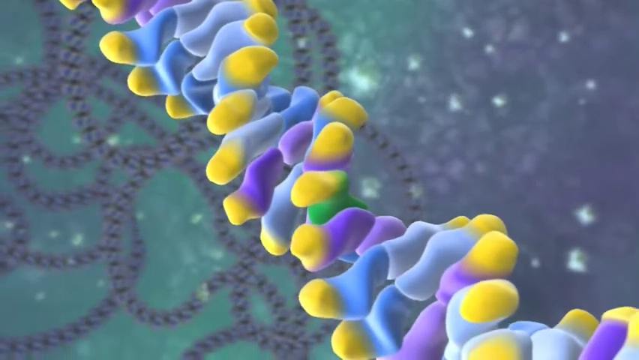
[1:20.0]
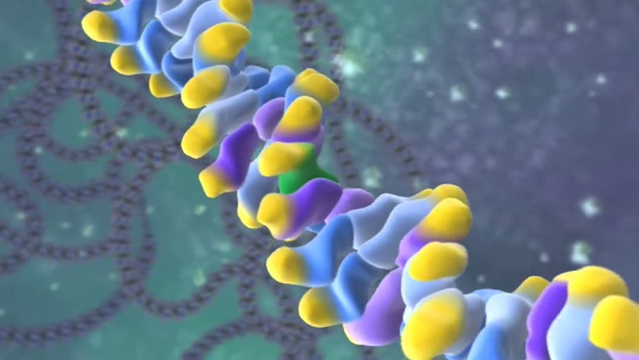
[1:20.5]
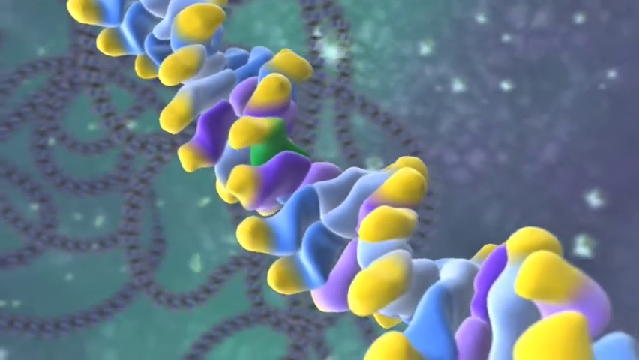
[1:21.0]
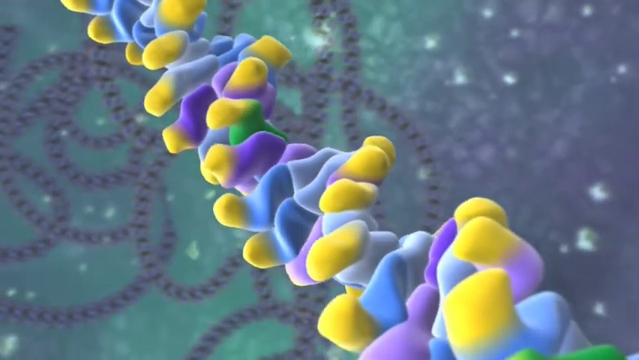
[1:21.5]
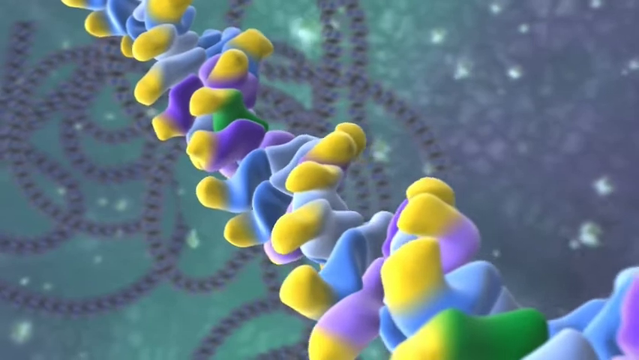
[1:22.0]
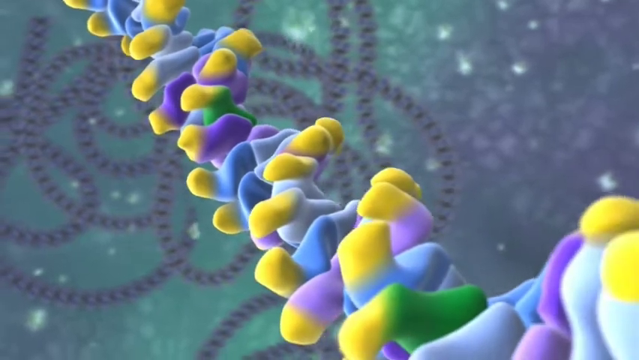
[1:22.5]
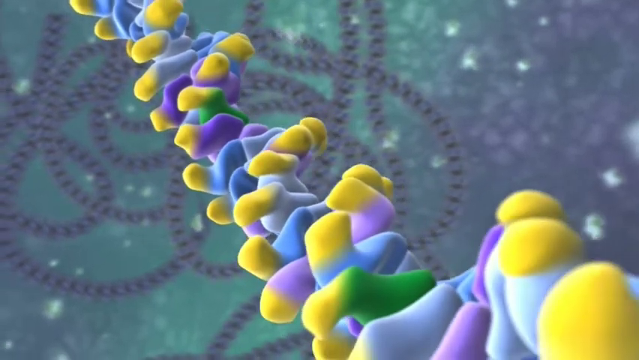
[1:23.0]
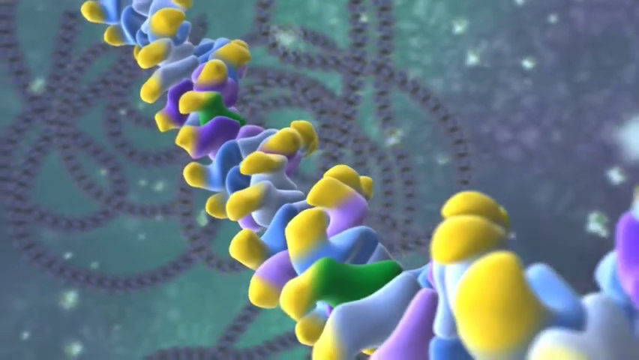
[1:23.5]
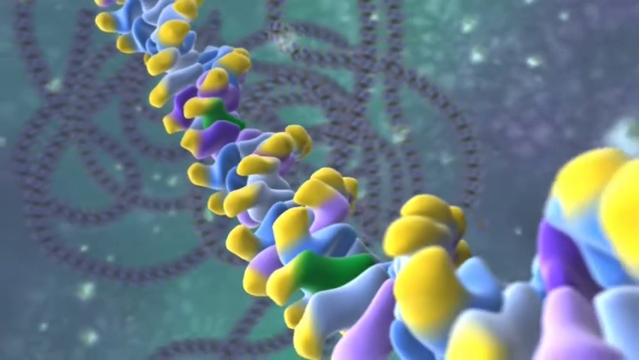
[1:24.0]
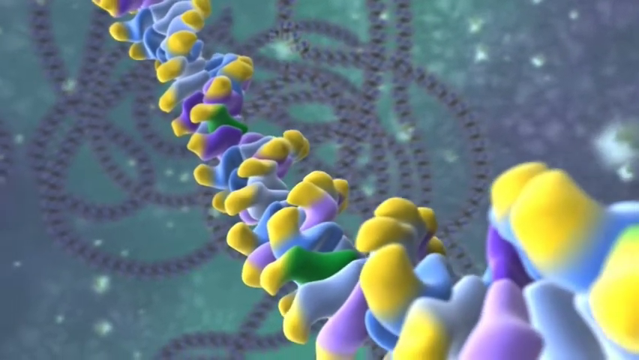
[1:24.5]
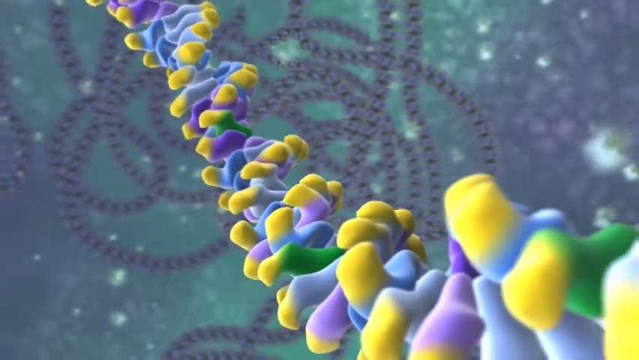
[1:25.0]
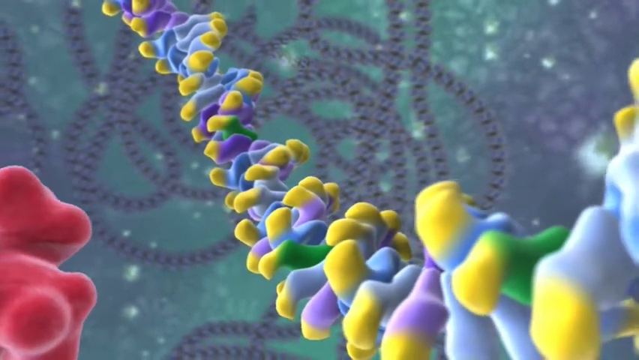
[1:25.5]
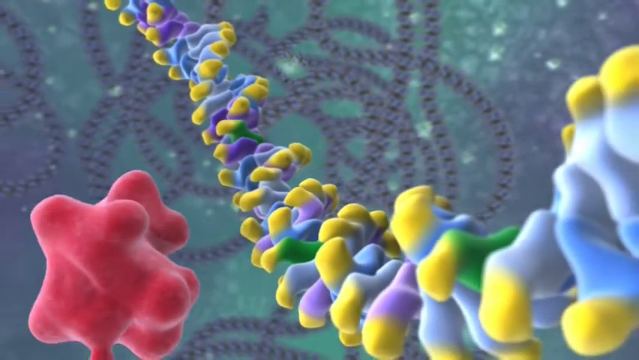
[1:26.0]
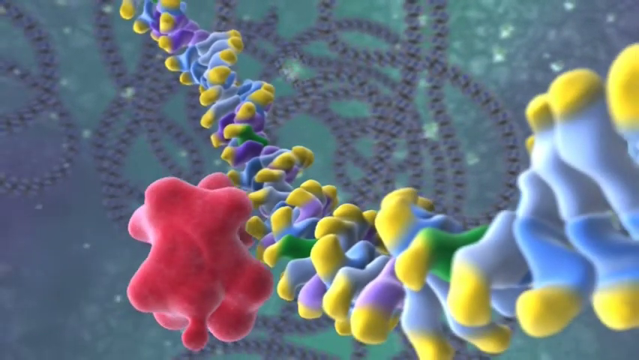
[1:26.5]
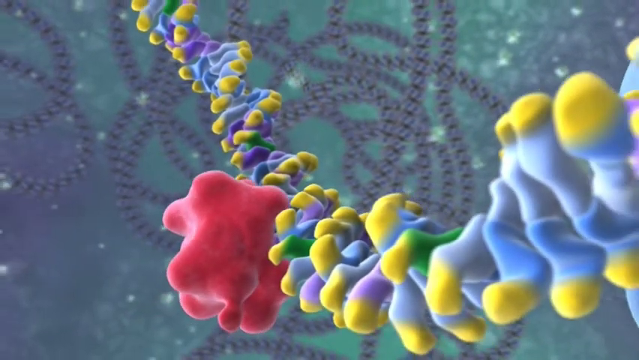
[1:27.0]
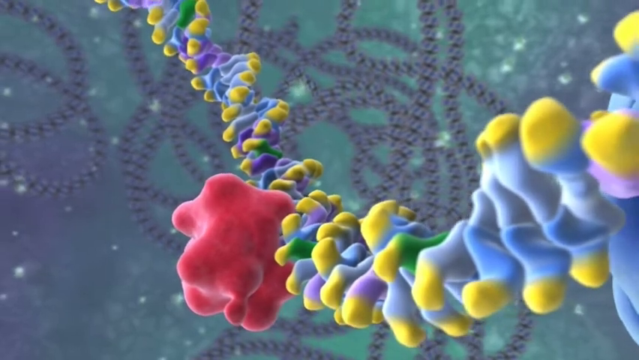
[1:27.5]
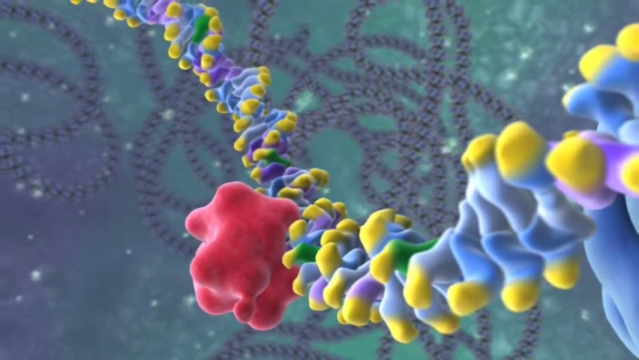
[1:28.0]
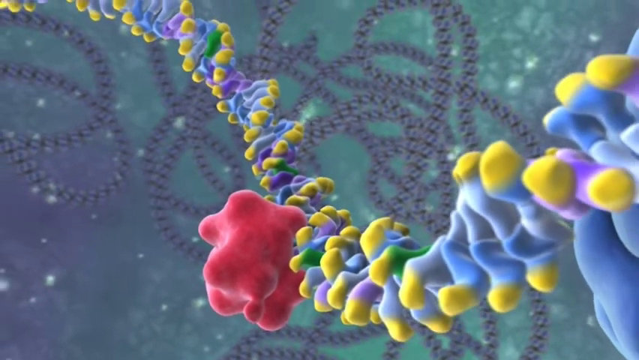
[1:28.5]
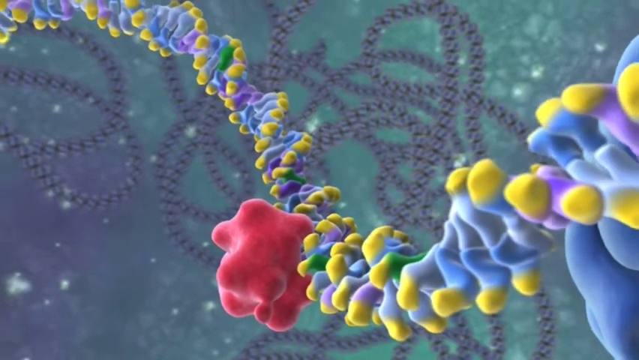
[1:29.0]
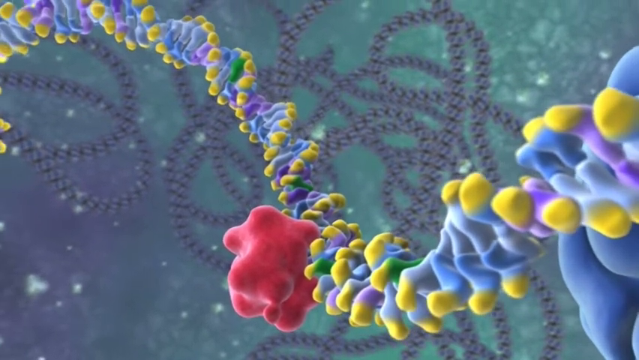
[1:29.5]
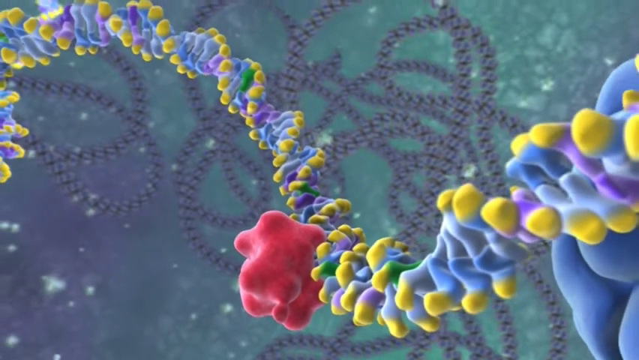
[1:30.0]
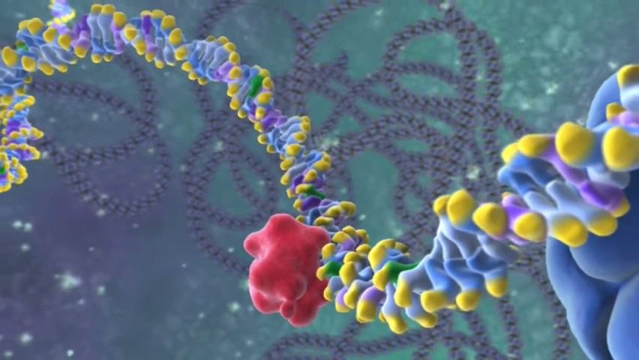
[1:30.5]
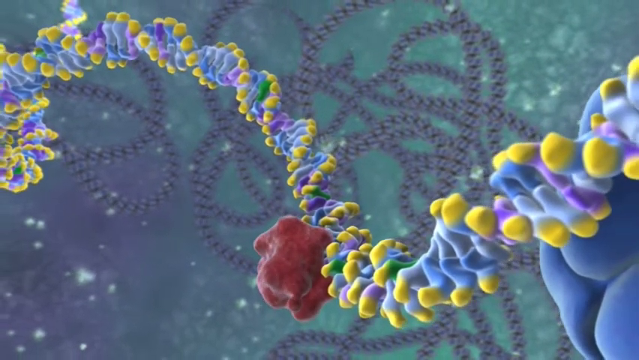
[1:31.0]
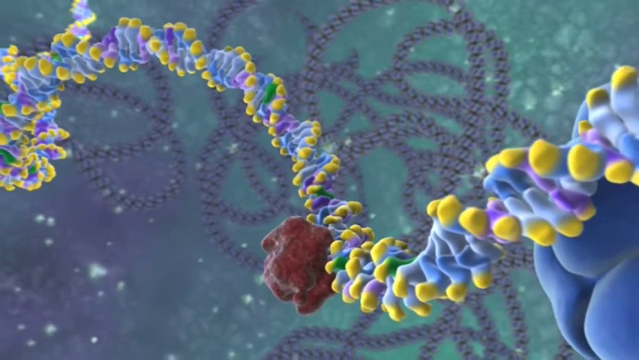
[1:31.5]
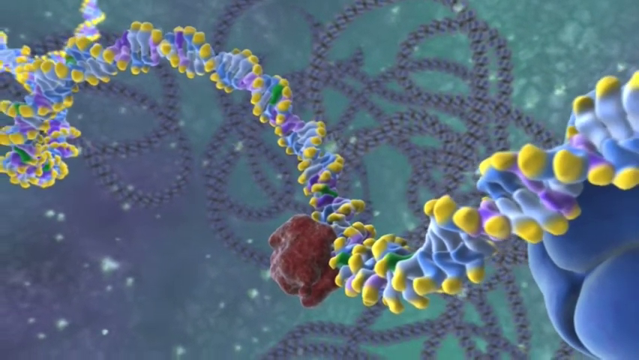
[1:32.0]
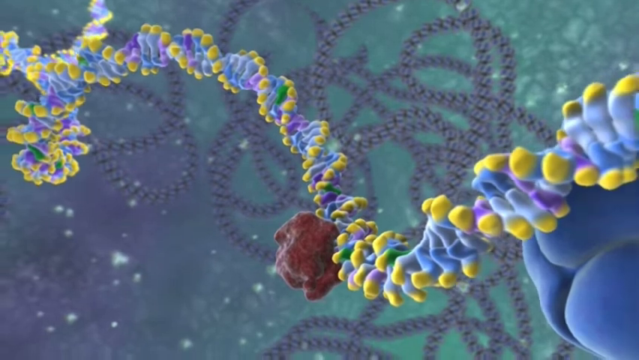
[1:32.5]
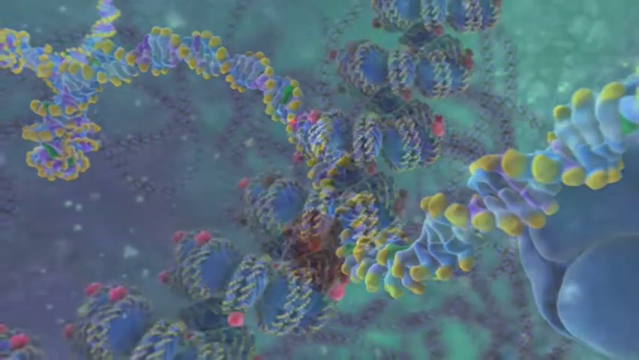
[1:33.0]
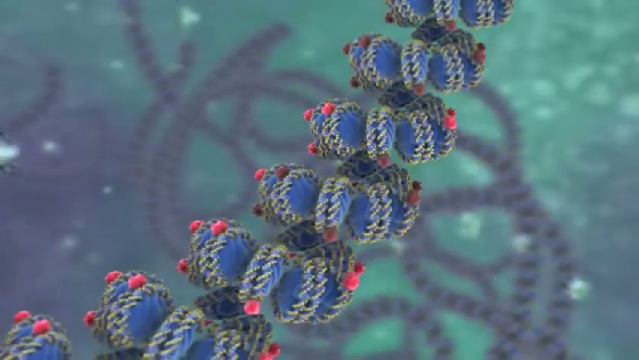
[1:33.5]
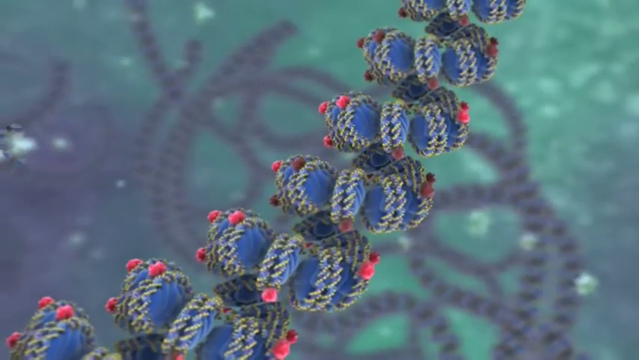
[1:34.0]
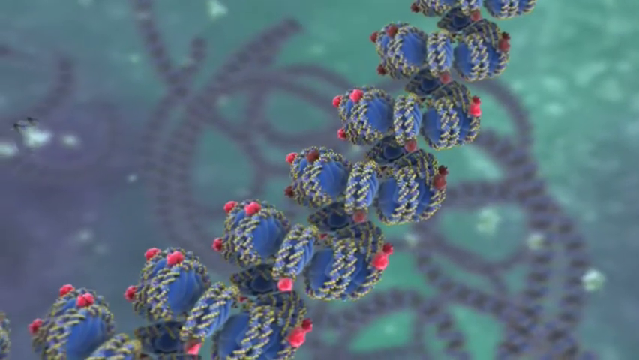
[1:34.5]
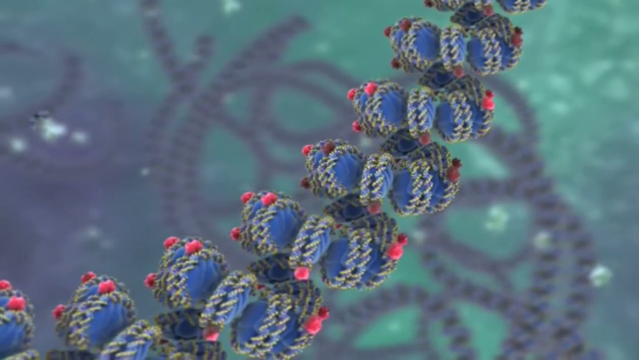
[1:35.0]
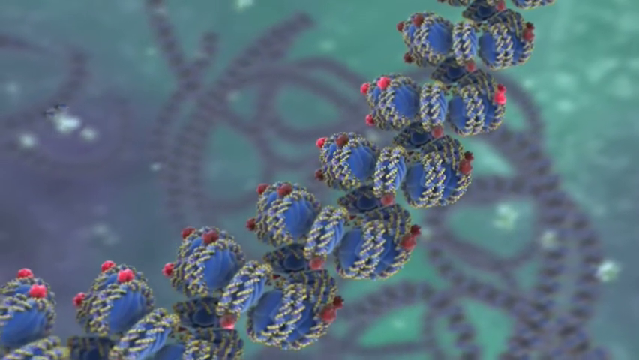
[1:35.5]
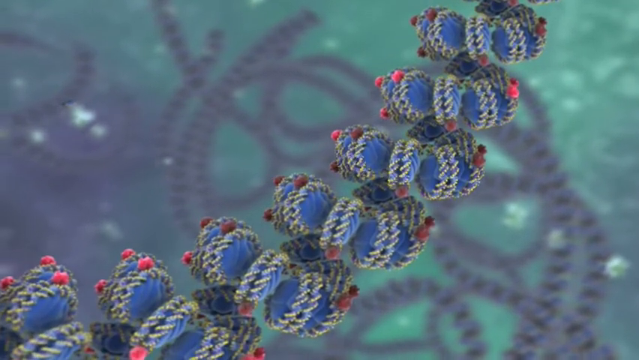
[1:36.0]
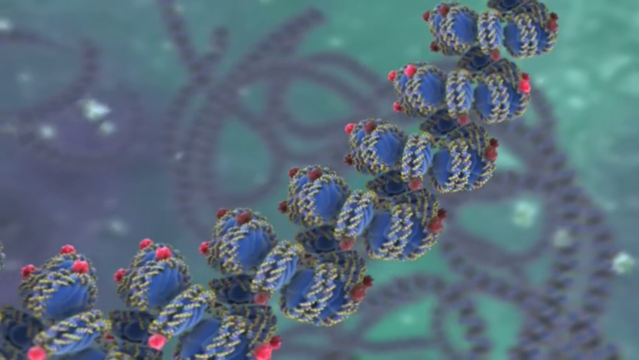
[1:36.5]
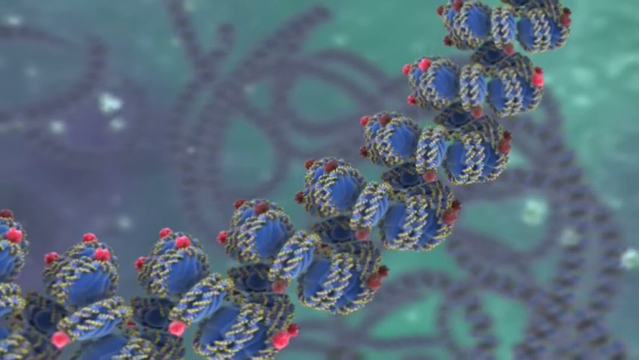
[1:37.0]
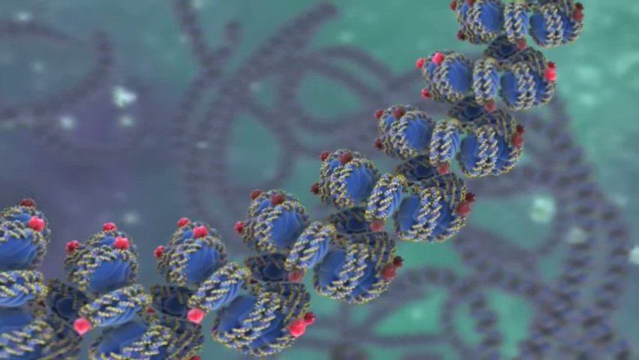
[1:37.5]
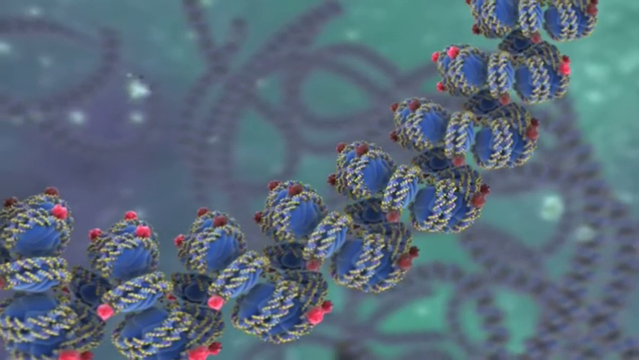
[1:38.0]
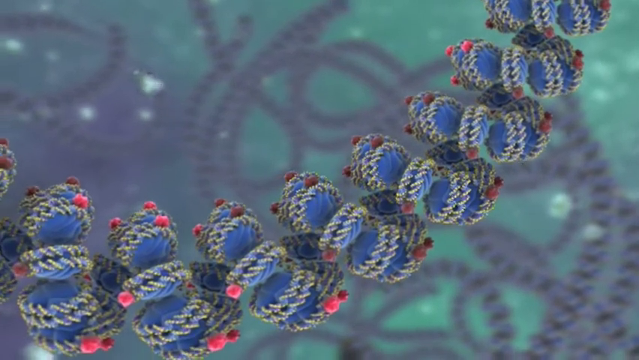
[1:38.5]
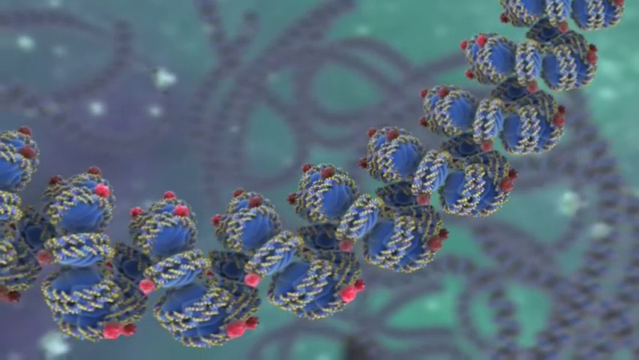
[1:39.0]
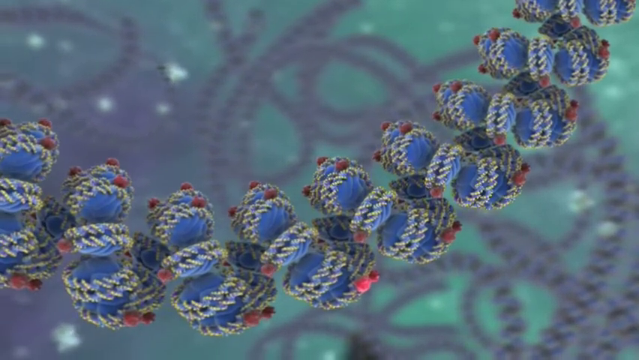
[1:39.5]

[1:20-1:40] A long rope-like structure somewhere in the body is blue and purple, with a little bit of green, much less frequent than the blue and purple. This structure is slightly different, with tips sticking out all the way along it in a spiral fashion; each tip is yellow. A big red blob enters from the left and attaches itself to the rope-like structure, and the camera slowly zooms out. The scene then transitions to a different rope-like structure made of a collection of thin blue circles nestled closely together and attached to a rope-like structure. The circles have what looks to be a fine yellow string wrapped around their edges, almost as if the edges had been threaded by a needle. Random red dots are attached in various locations along the structure. The camera moves down and to the left along the structure.